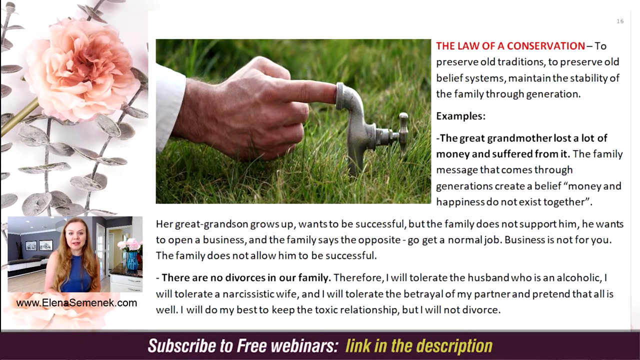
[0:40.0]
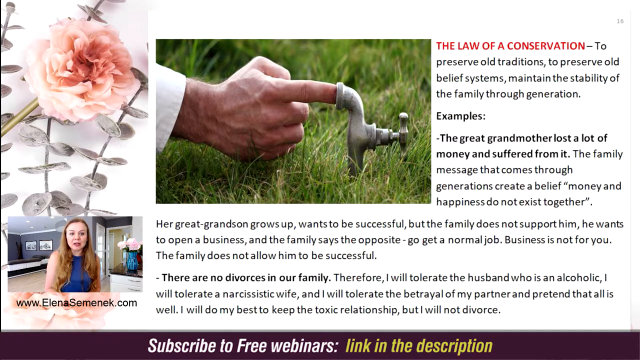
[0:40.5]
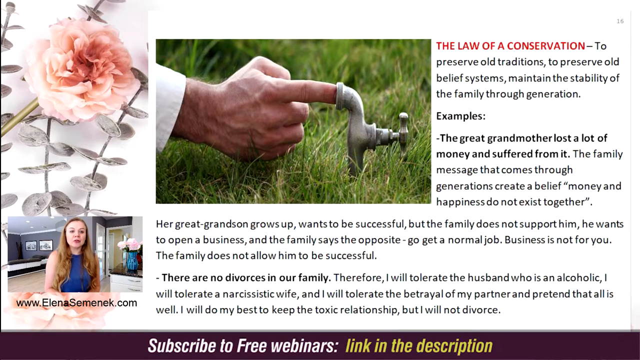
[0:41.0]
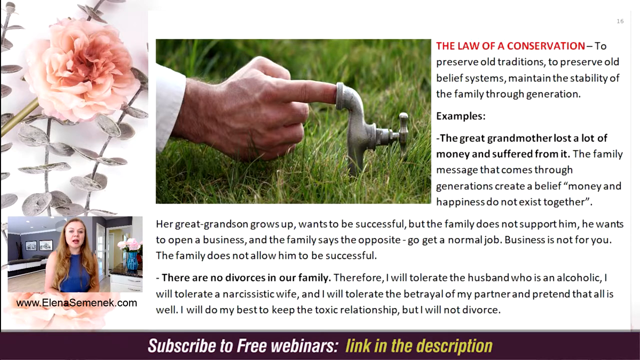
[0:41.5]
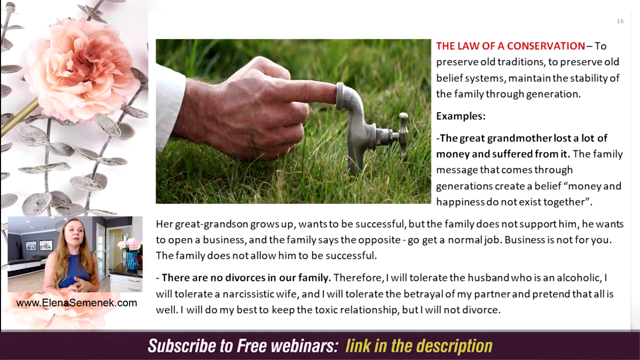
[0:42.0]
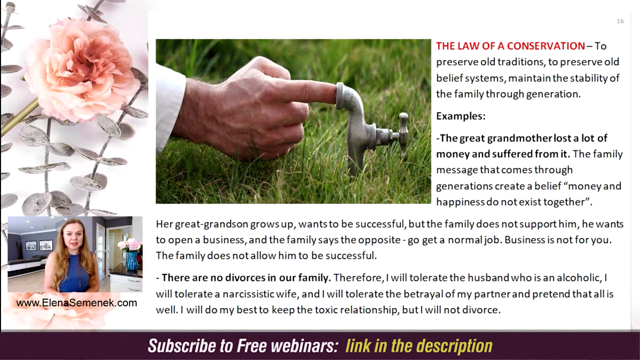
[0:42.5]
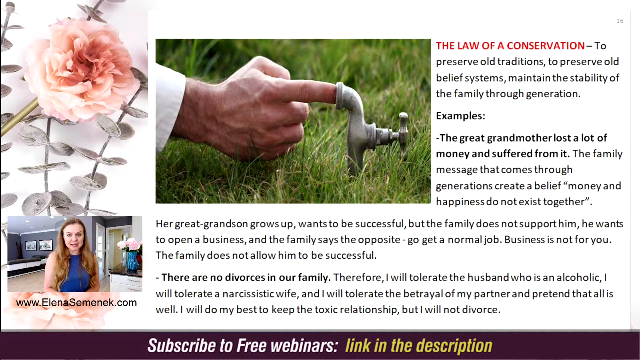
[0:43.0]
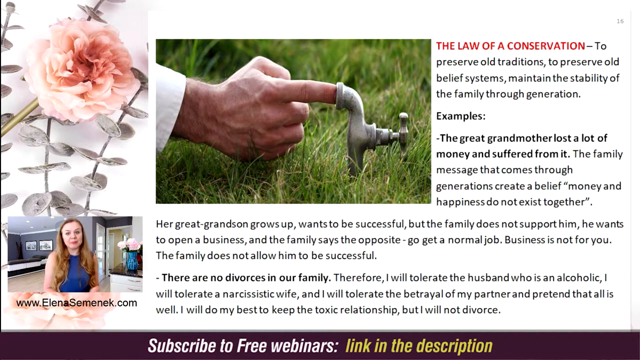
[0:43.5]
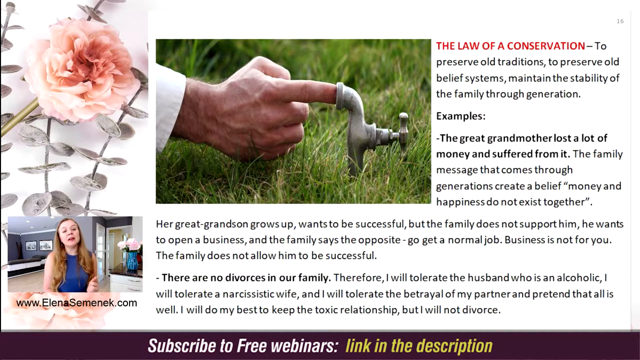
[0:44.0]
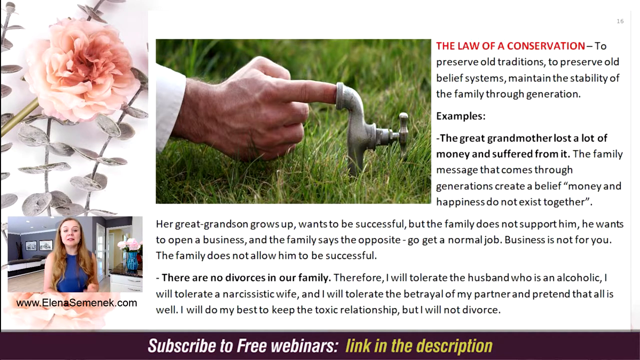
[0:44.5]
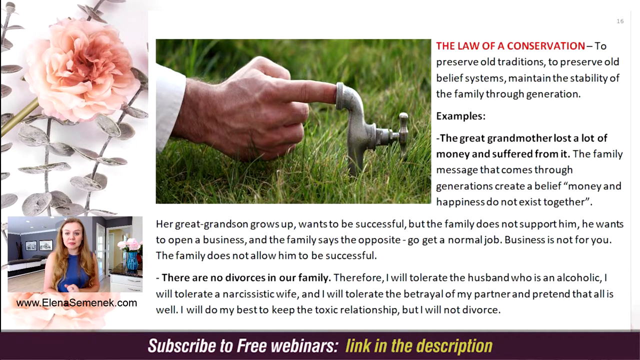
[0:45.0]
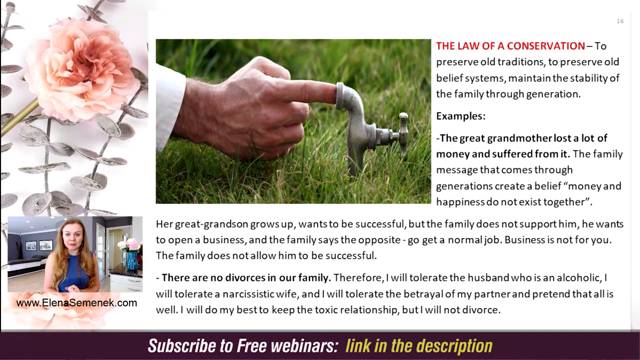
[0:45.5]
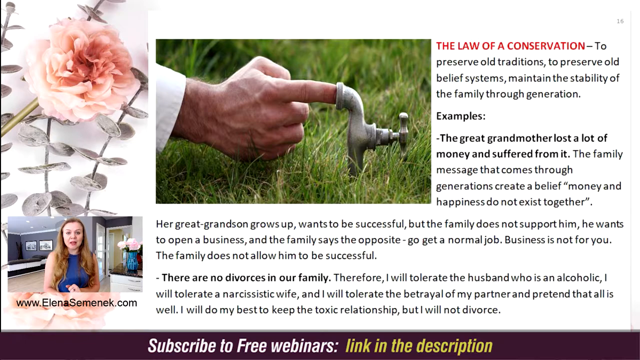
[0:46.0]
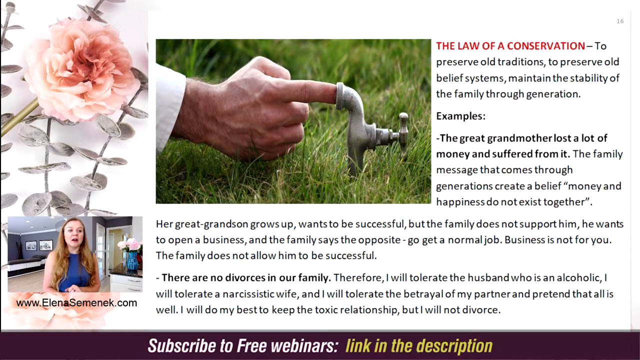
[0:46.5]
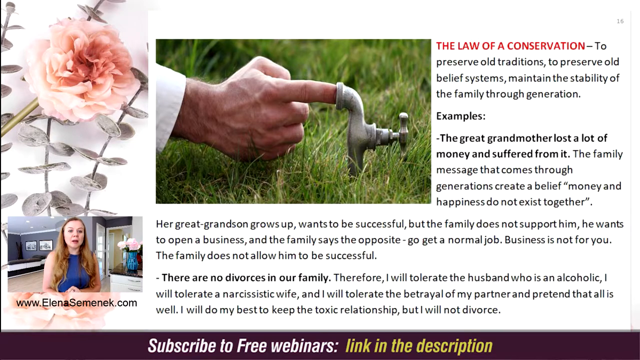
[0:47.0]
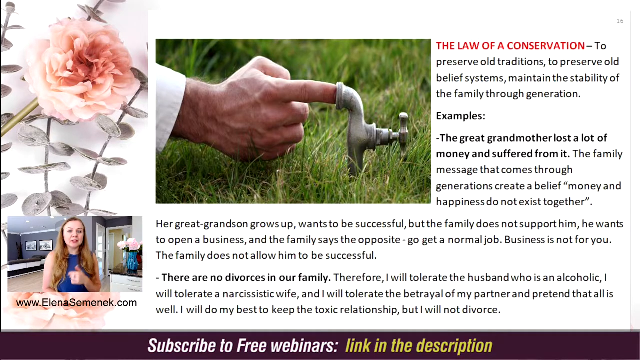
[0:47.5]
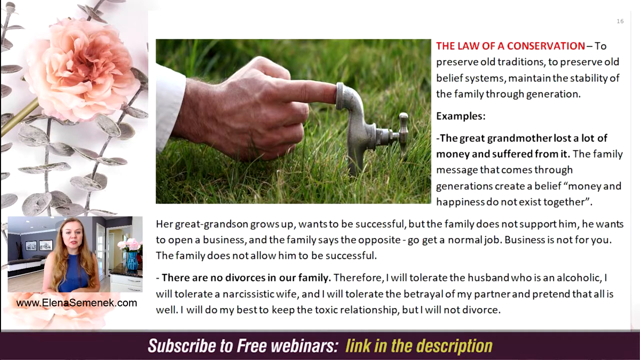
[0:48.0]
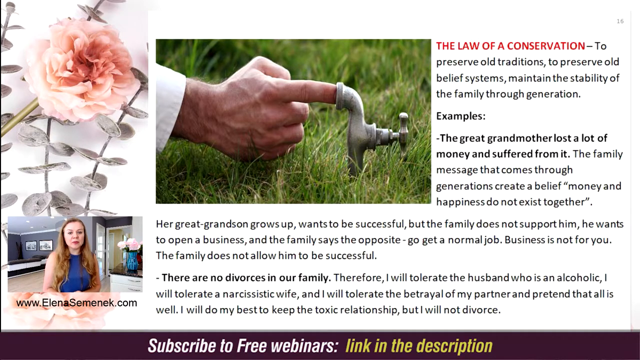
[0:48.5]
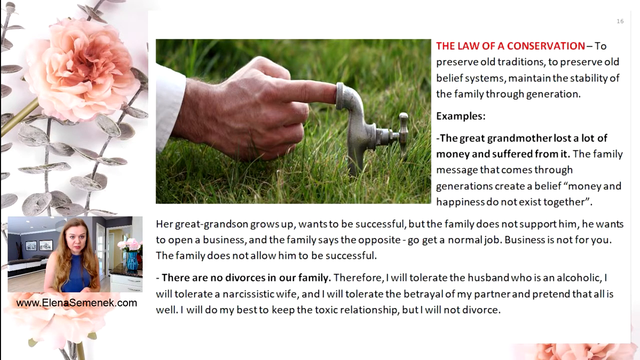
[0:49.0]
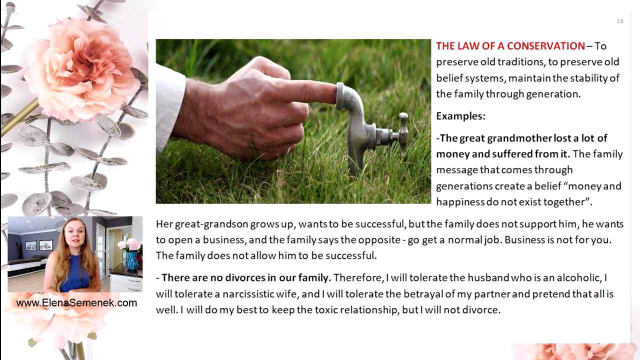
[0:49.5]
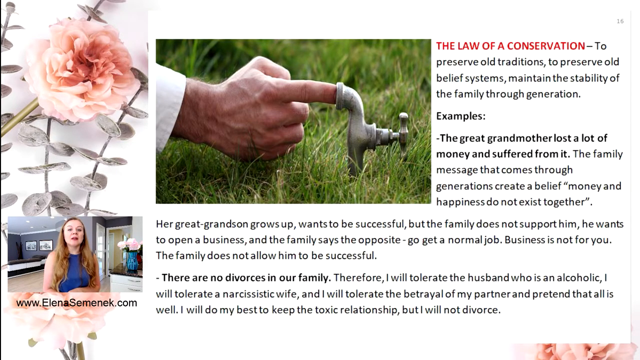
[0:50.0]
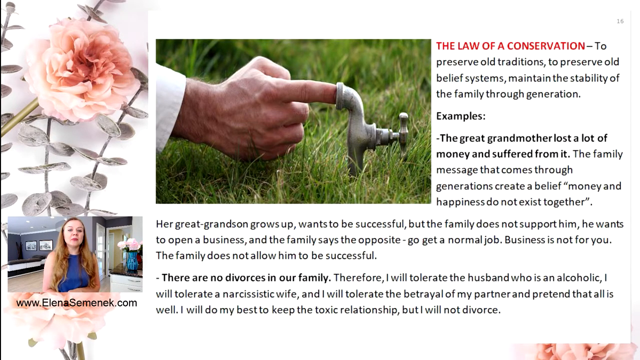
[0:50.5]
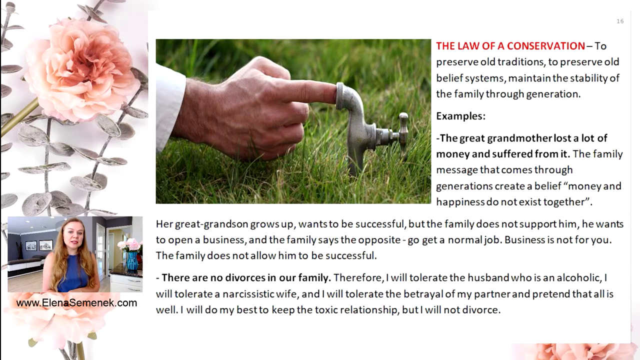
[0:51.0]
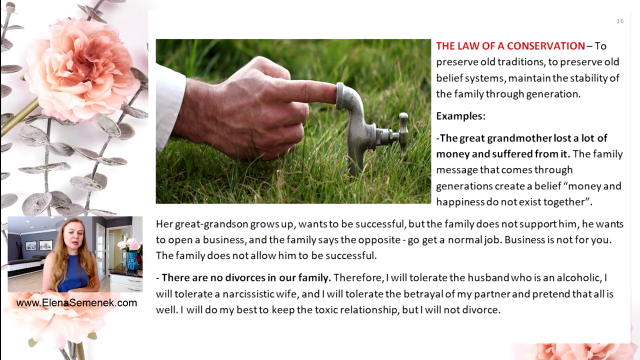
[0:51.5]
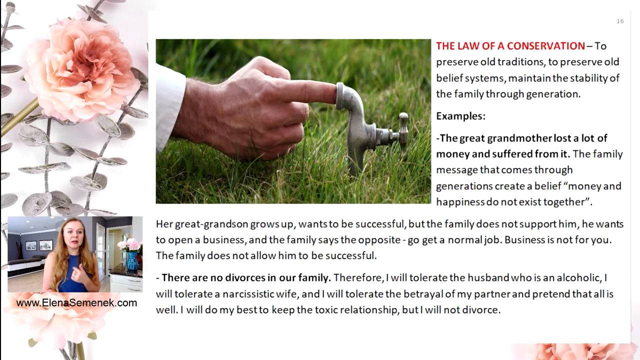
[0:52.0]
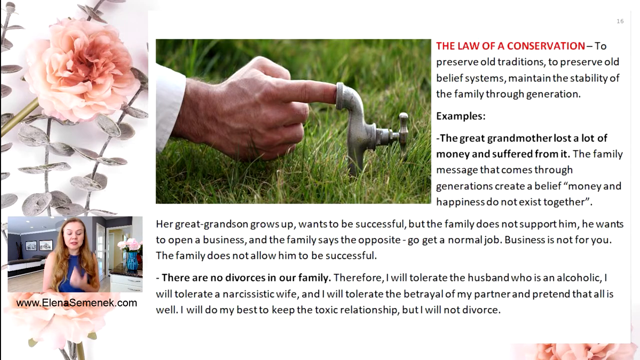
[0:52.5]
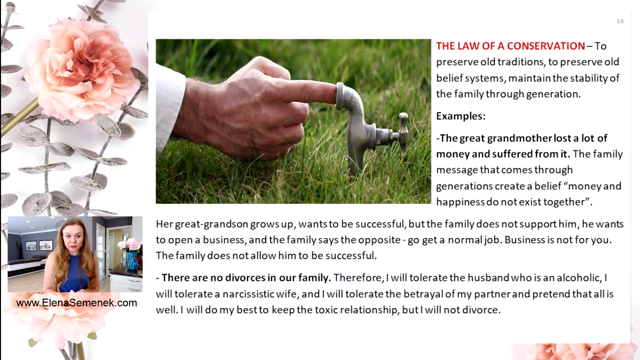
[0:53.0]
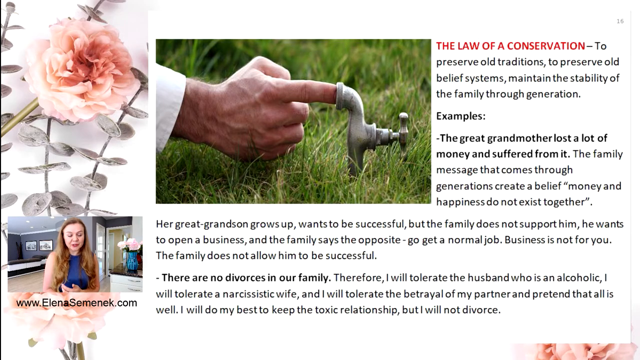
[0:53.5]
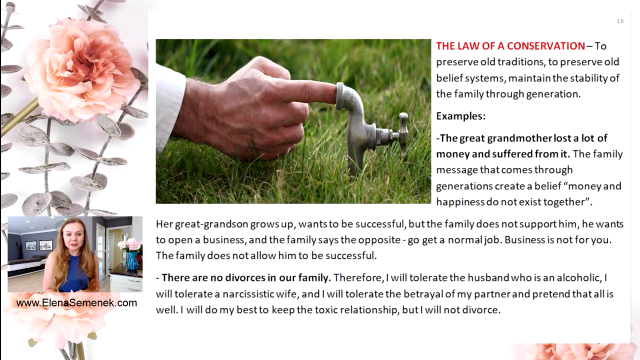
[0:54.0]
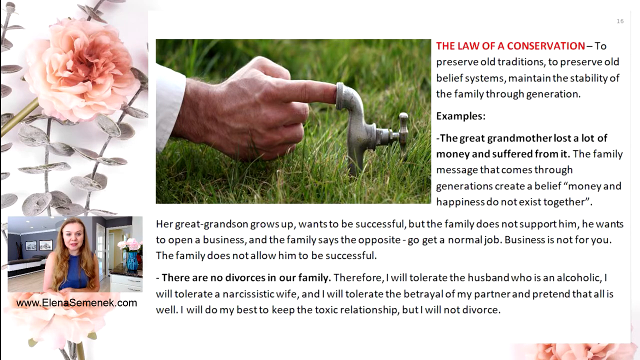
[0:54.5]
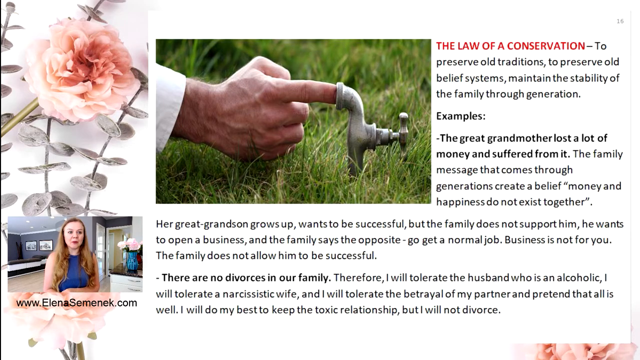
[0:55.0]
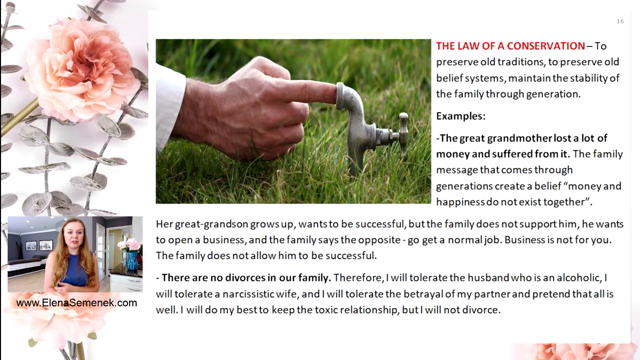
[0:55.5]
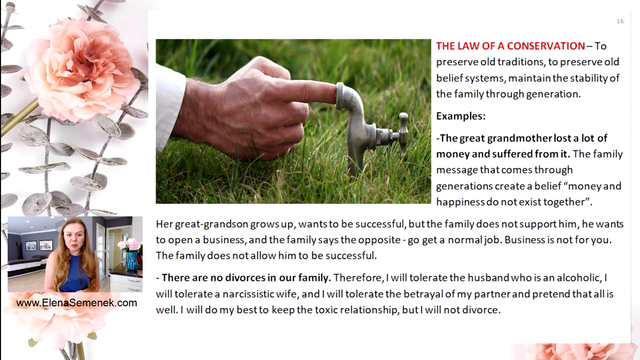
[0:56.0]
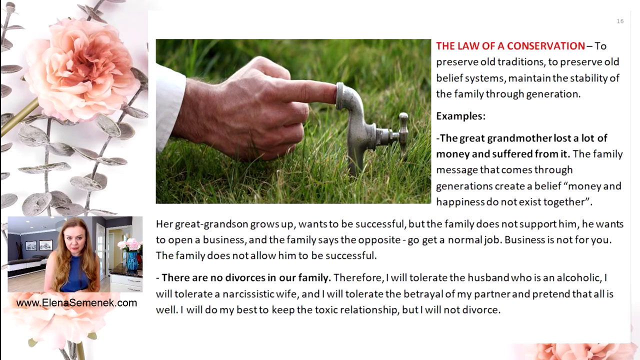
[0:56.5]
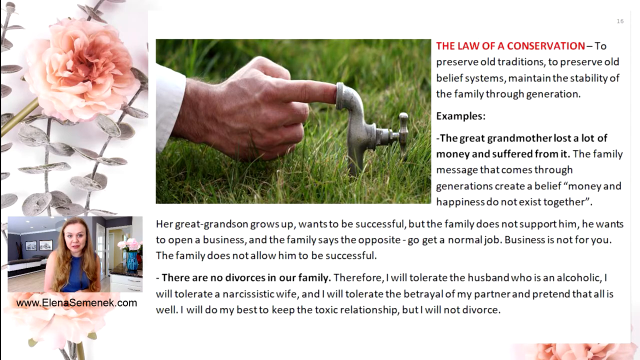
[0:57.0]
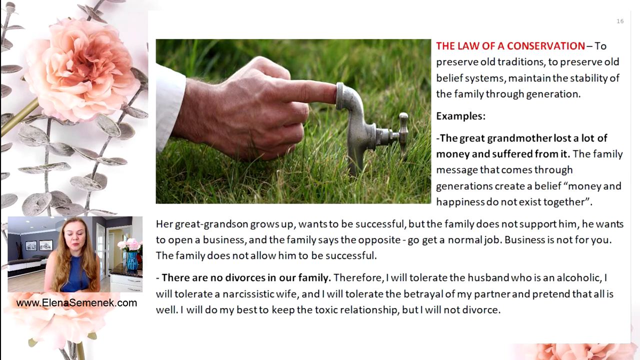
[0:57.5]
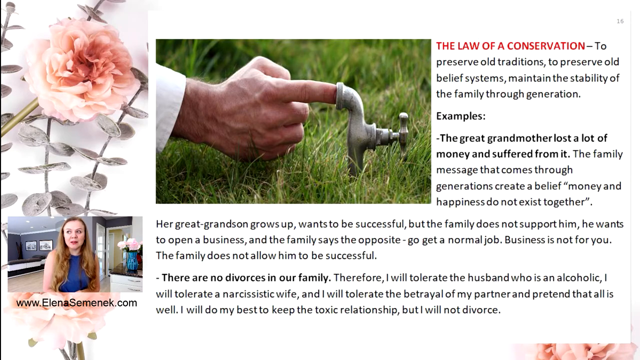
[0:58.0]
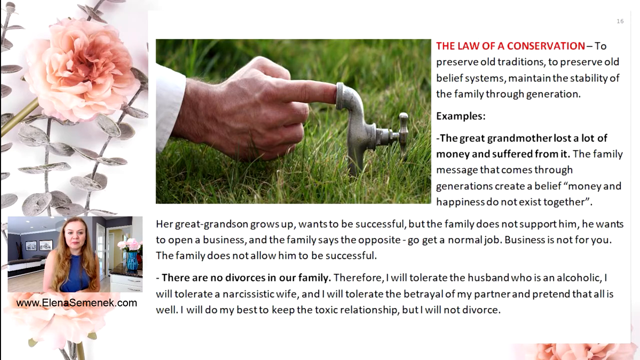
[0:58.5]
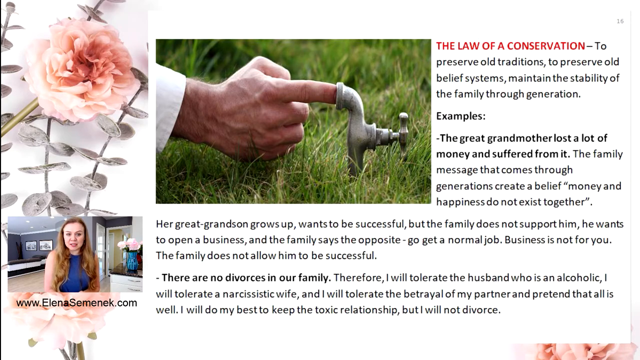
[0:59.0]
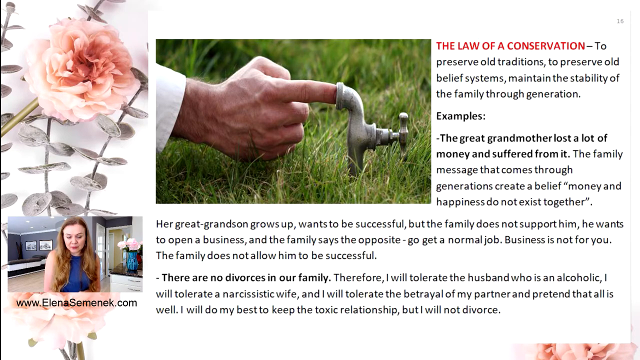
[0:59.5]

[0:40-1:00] Nothing changes on screen. The lady is still talking, moving her left hand from top to bottom, below her chest, as she speaks.